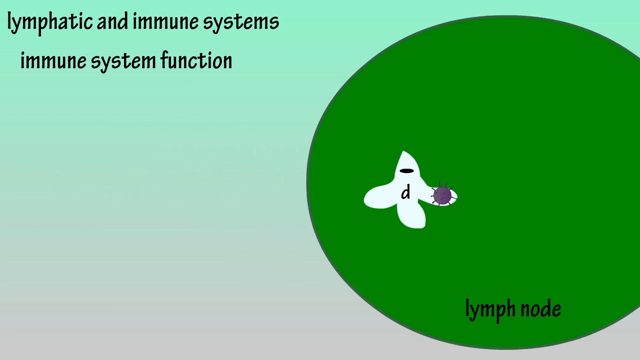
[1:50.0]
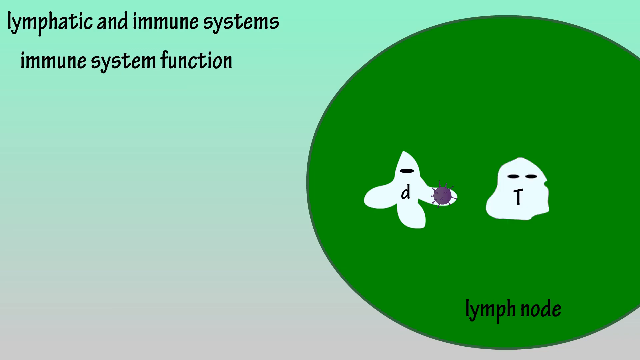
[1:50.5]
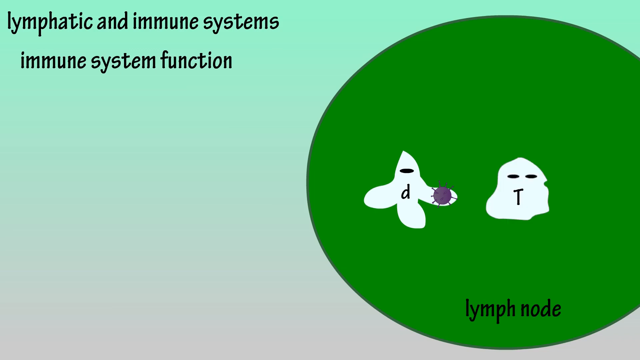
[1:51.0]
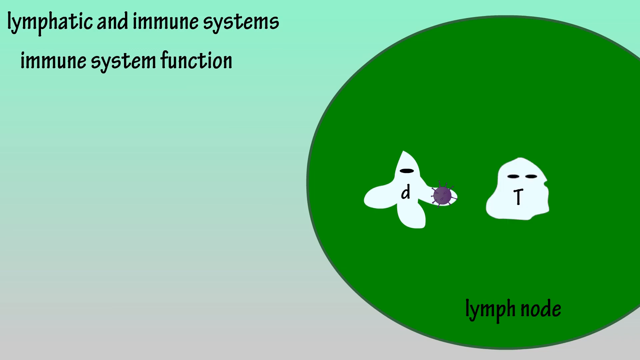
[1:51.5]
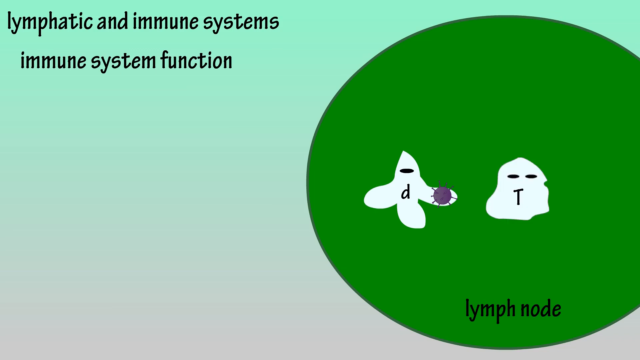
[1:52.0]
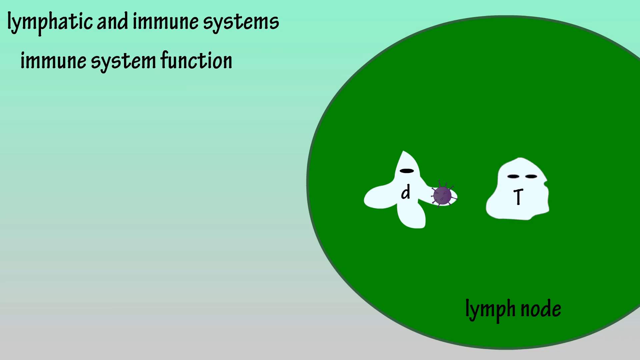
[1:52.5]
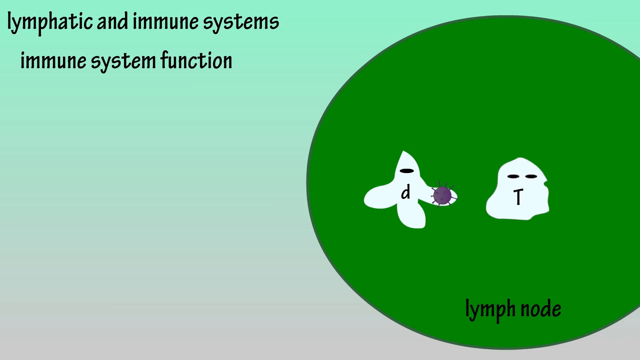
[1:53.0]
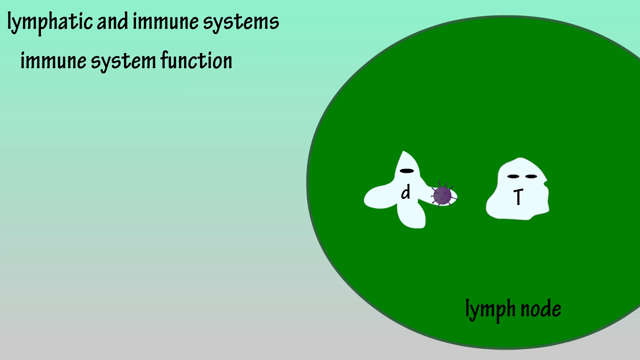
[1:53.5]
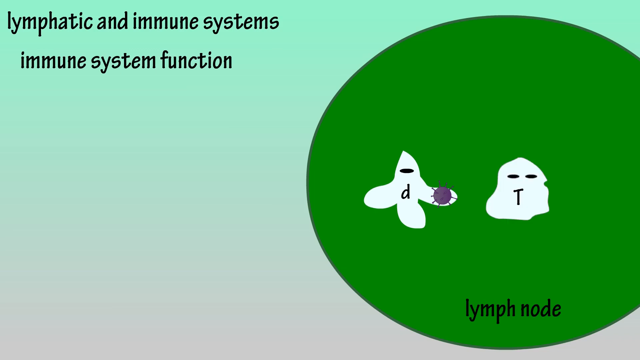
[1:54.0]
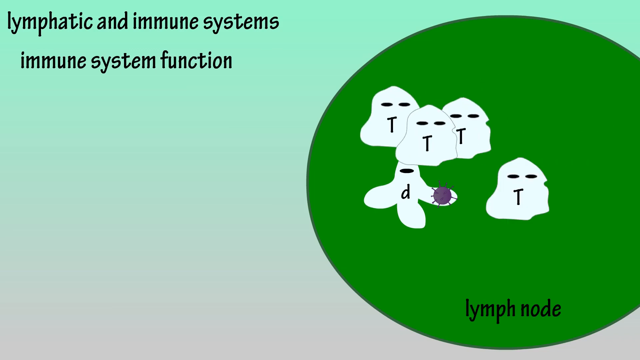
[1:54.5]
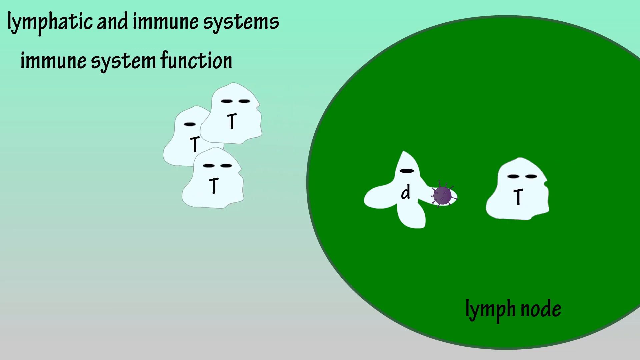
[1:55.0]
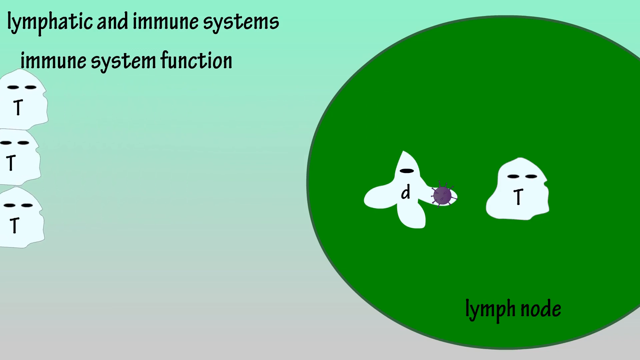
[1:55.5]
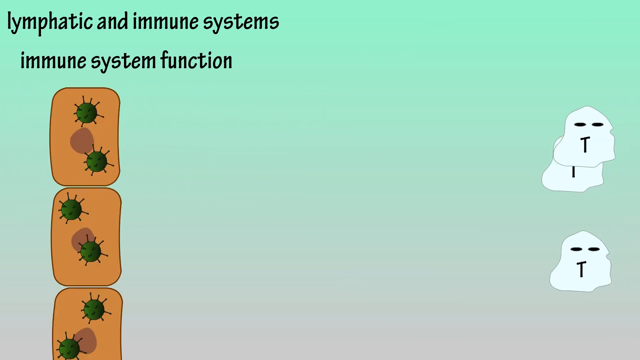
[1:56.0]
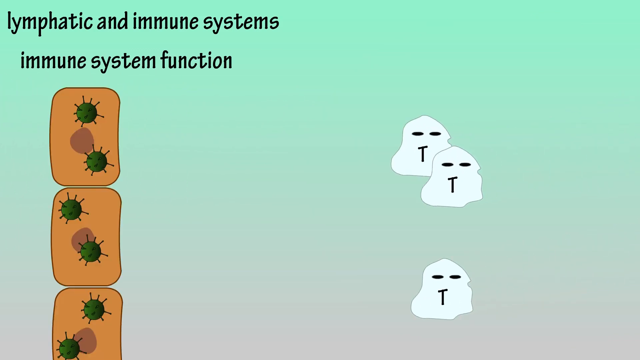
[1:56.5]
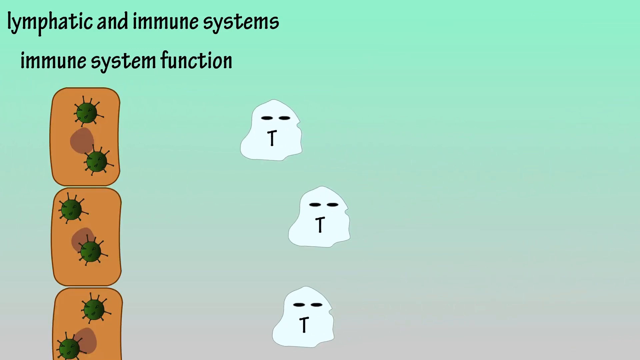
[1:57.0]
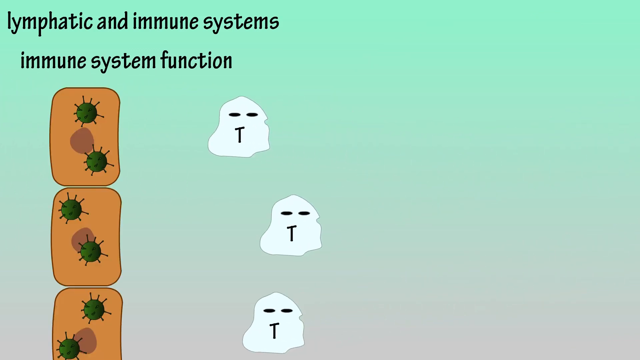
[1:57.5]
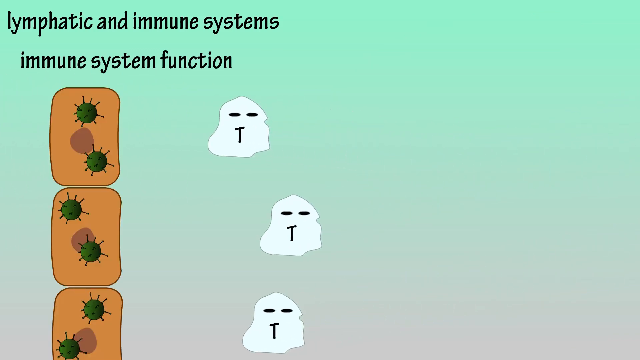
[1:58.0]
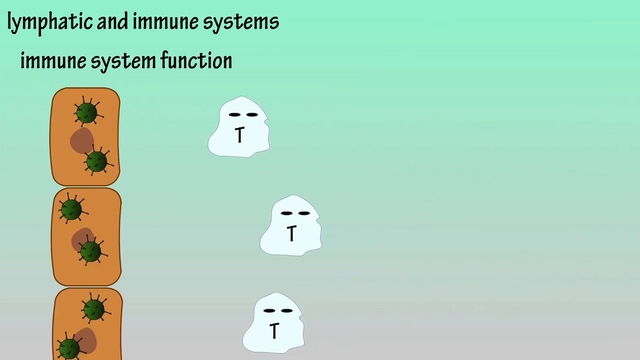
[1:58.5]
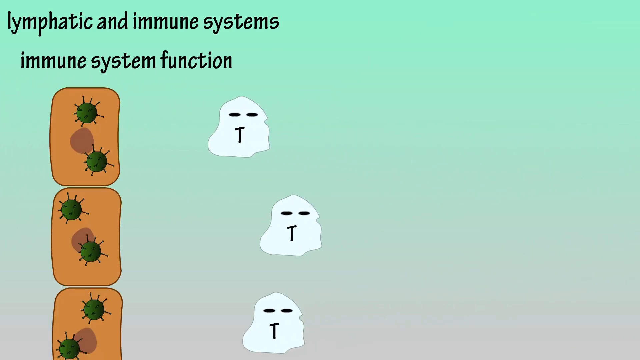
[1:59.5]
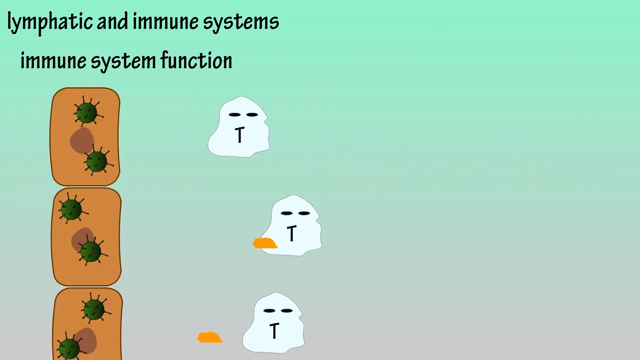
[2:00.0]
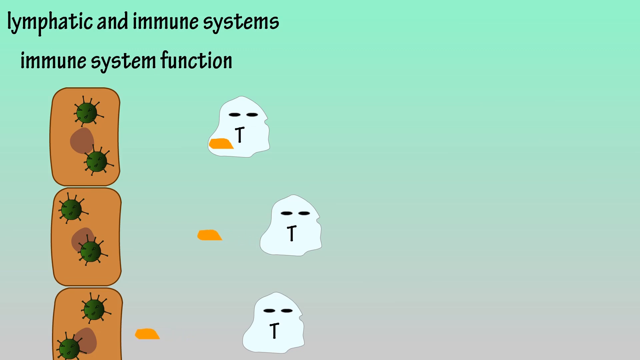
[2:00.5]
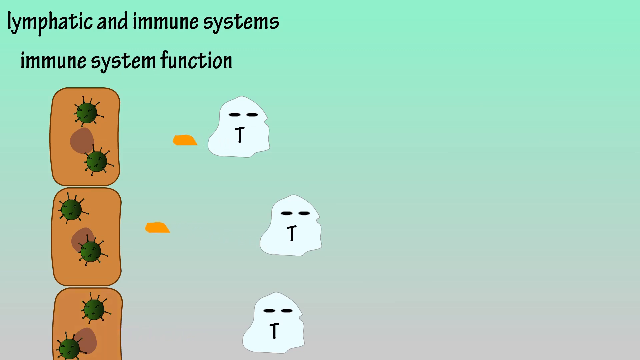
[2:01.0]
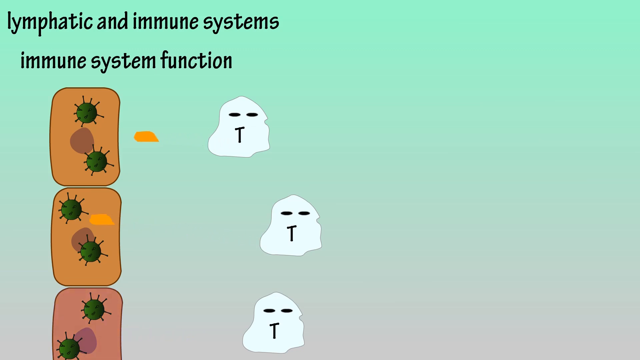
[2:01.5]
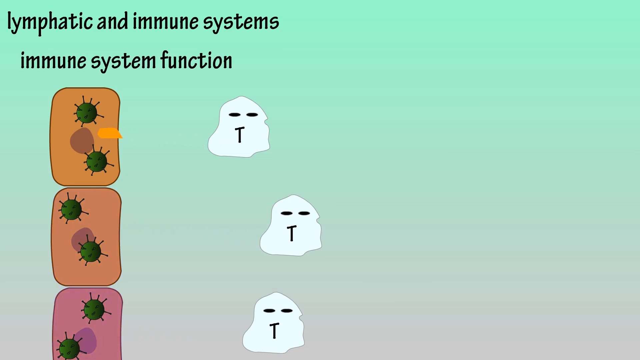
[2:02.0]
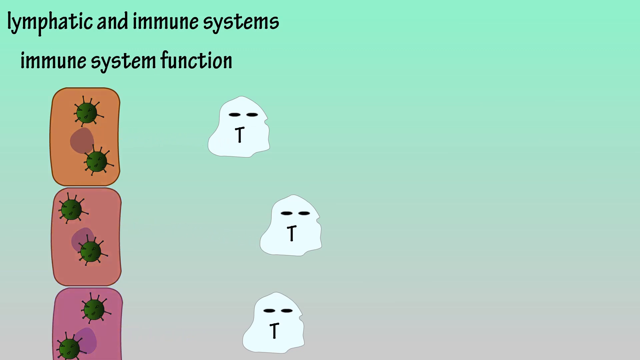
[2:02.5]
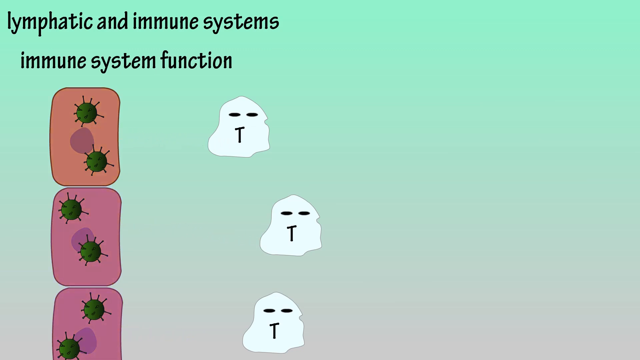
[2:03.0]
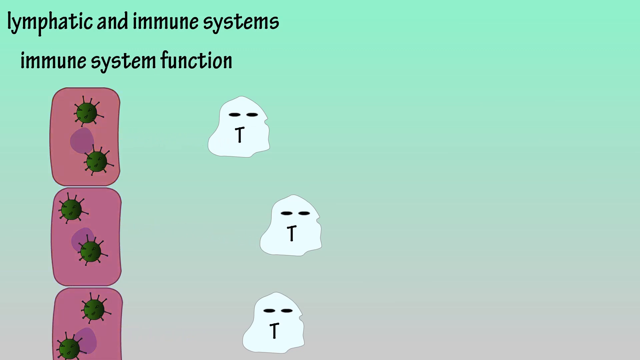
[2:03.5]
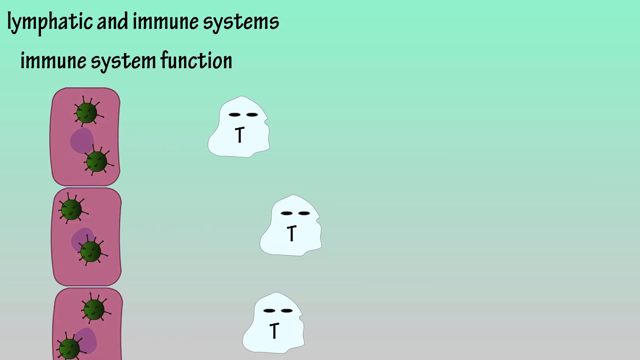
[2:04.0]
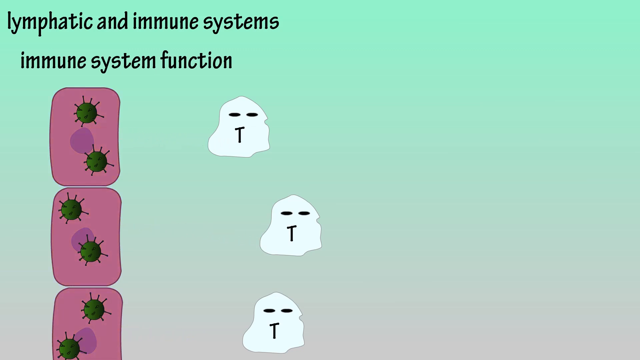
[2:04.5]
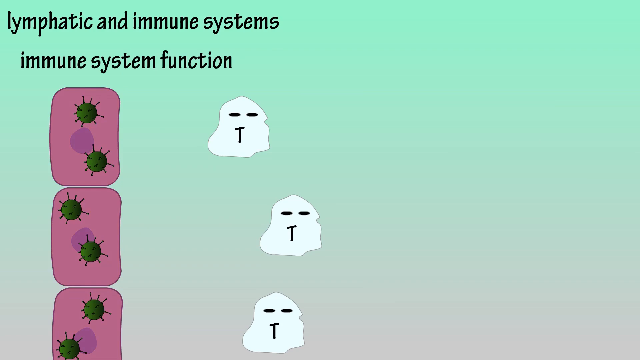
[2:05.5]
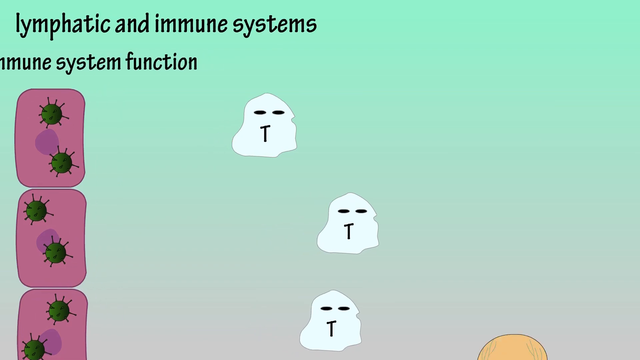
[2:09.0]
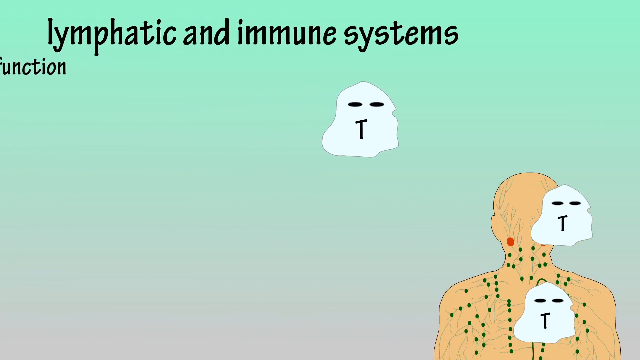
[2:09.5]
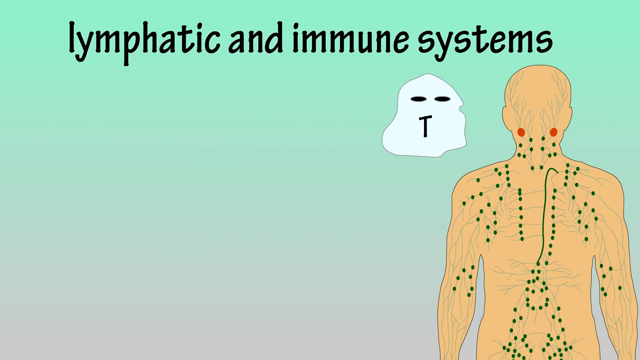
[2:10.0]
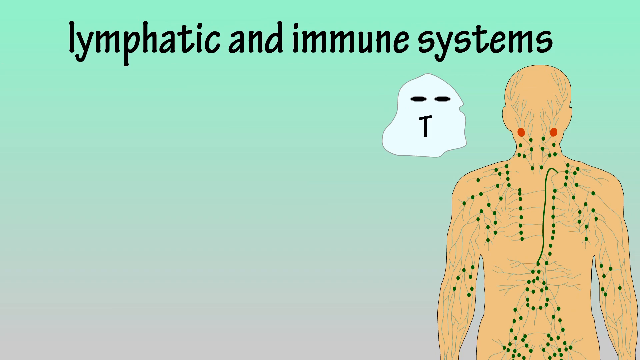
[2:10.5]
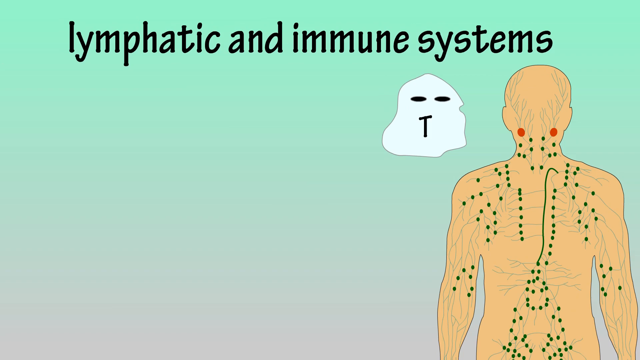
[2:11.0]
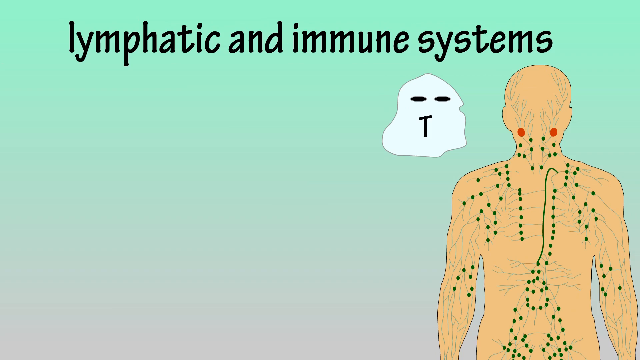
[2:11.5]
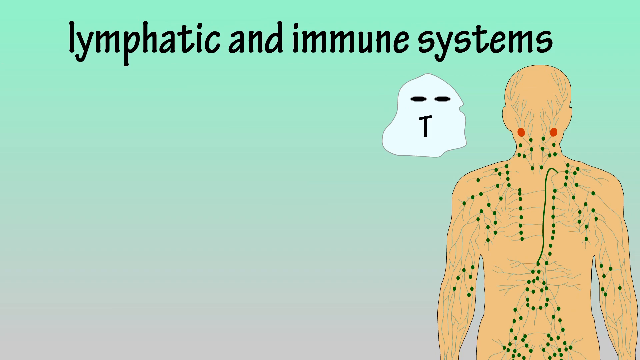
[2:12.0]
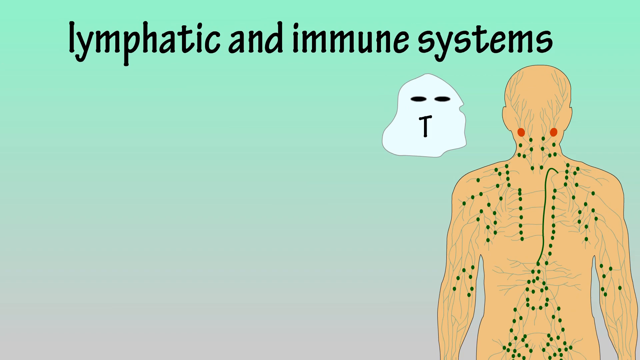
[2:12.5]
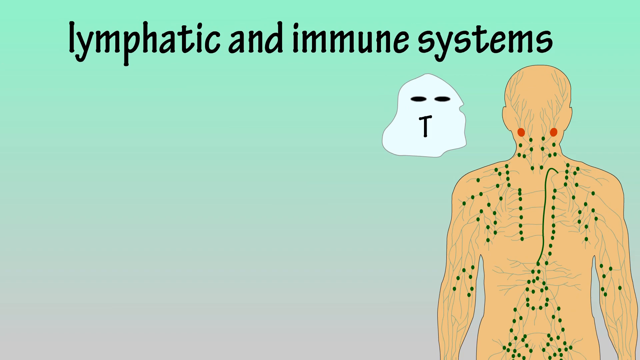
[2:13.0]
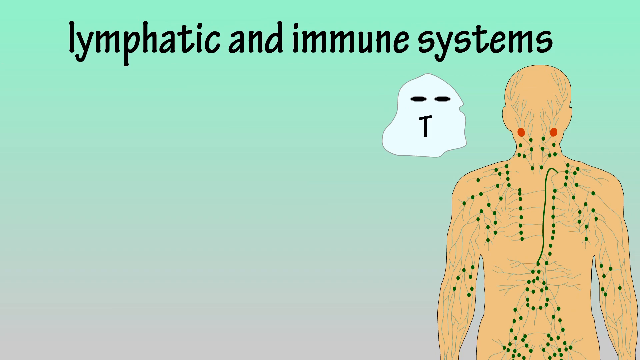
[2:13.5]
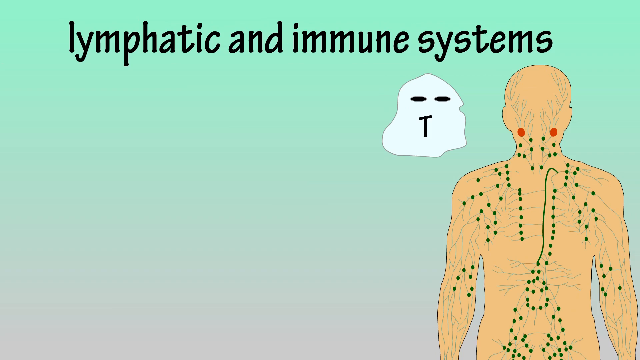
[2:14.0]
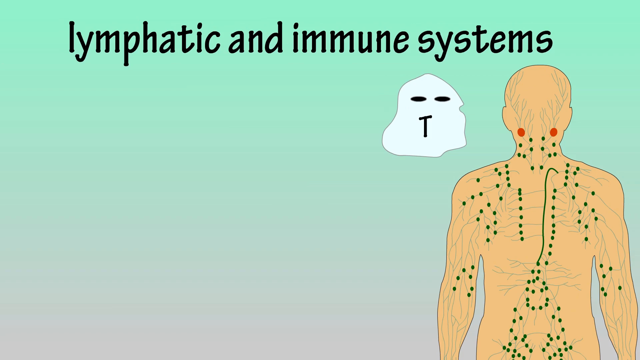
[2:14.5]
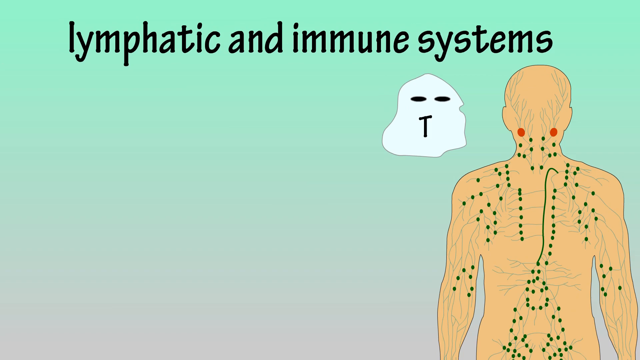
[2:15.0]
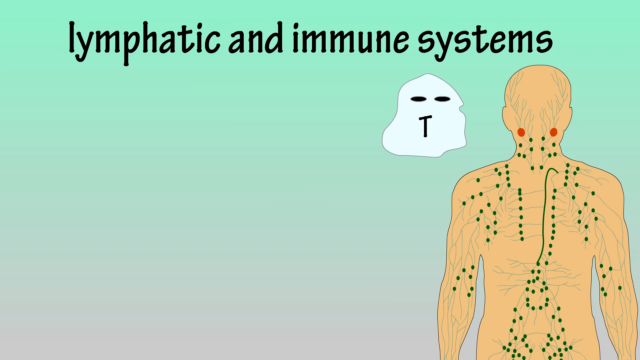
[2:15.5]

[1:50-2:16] Inside the lymph node is the white blood cell with the letter D holding a bacterium in its hand, and another white blood cell with the letter T on it appears. A few white blood cells, about three, go out of the lymph node toward other parts of skin, each with two bacteria in it. They shoot something like yellow bullets toward the skin, and all of those skin parts turn from brown to purple. The human body with all the lymph vessels comes back onto the screen, with a white blood cell with the letter T next to it and the text "lymphatic and immune system" at the top. The scene ends with the white blood cell and the human body showing the tonsils, lymph vessels and lymph nodes.